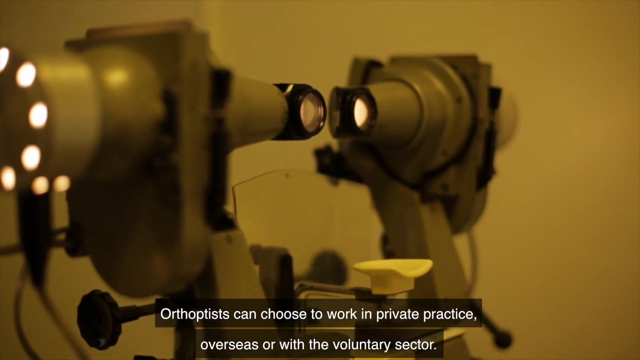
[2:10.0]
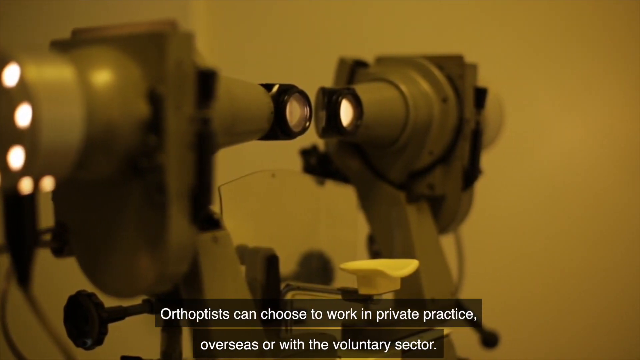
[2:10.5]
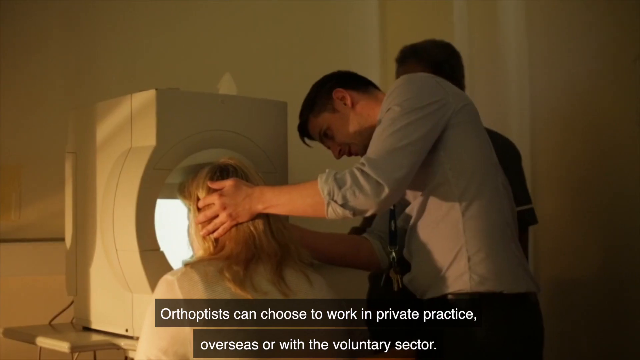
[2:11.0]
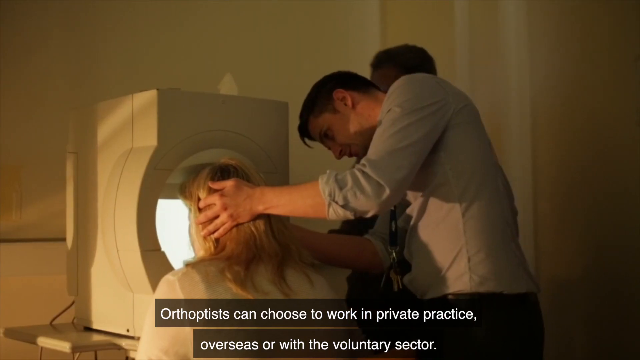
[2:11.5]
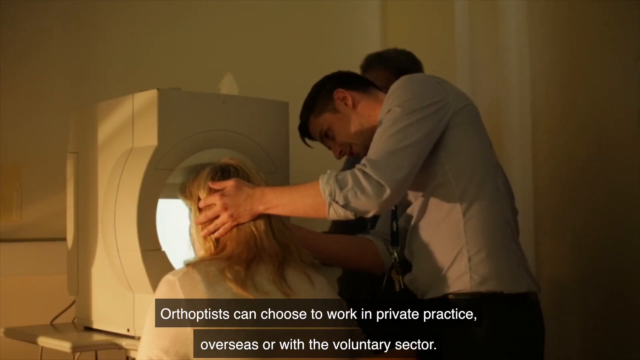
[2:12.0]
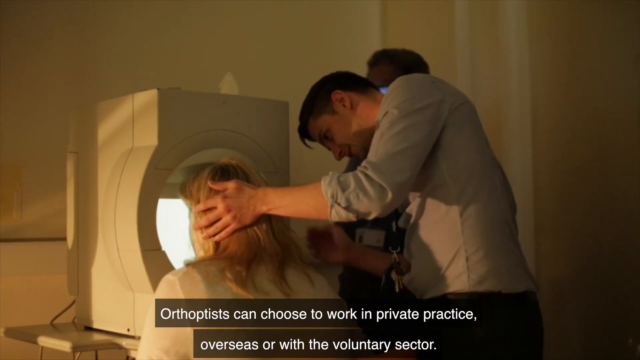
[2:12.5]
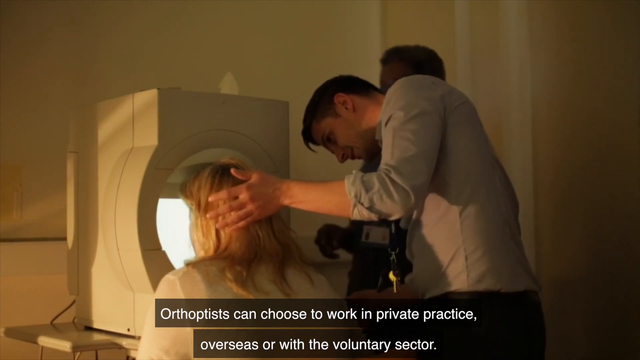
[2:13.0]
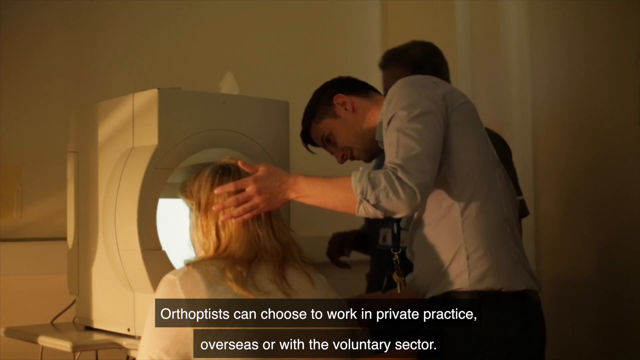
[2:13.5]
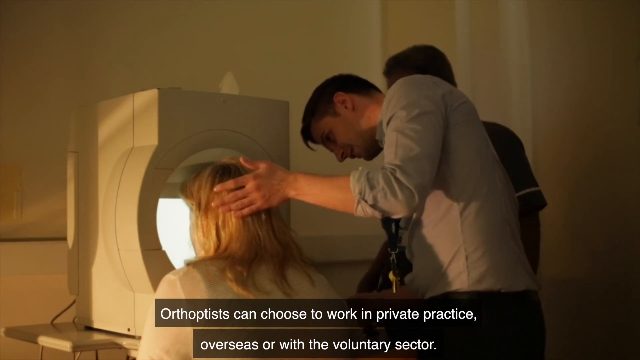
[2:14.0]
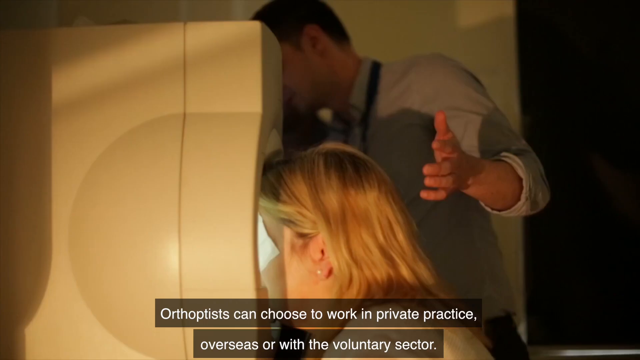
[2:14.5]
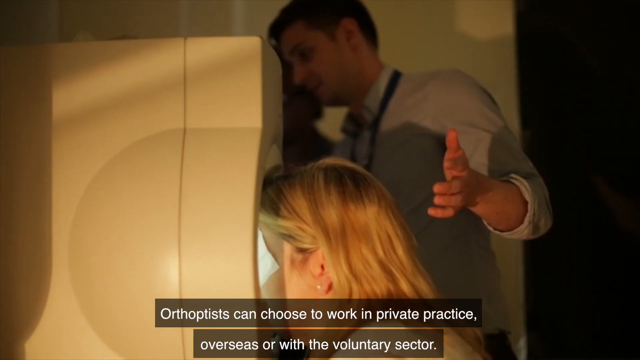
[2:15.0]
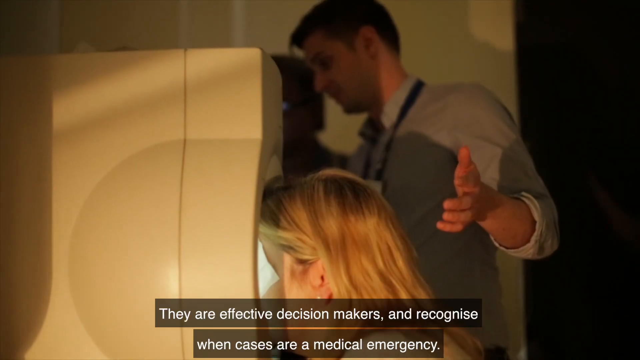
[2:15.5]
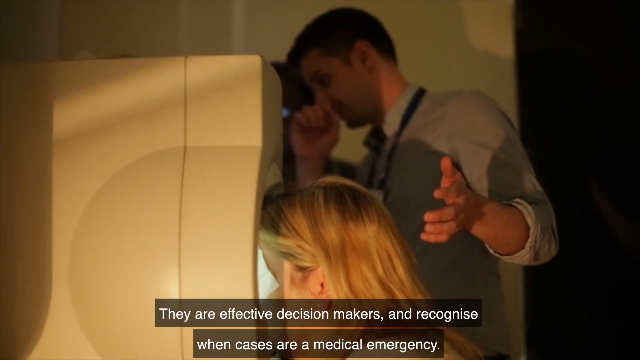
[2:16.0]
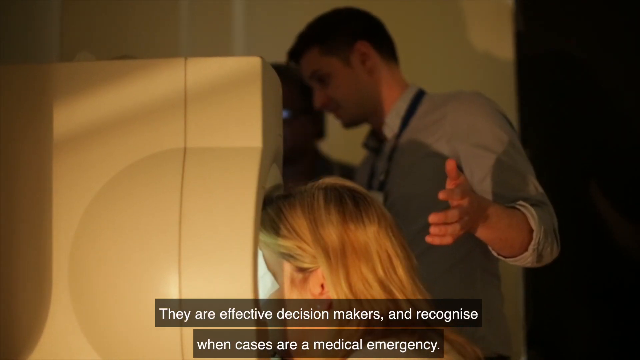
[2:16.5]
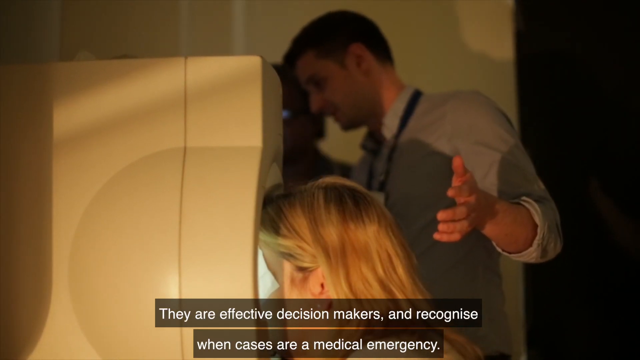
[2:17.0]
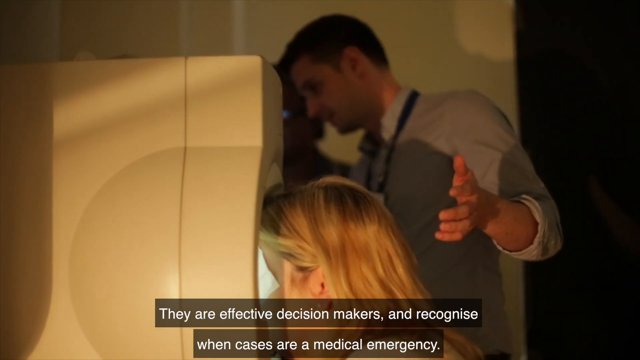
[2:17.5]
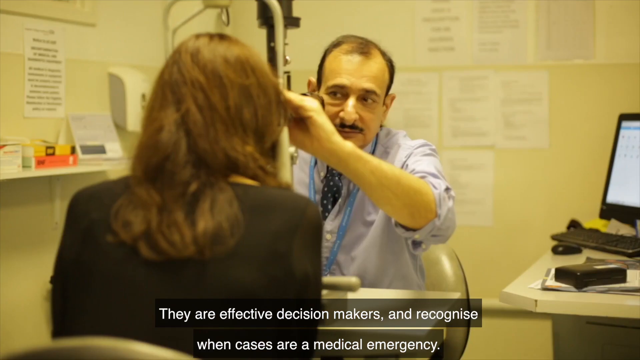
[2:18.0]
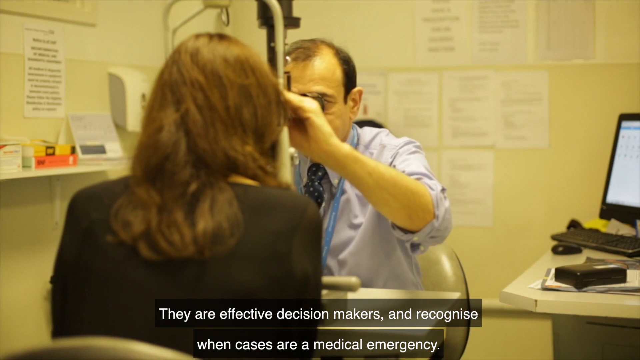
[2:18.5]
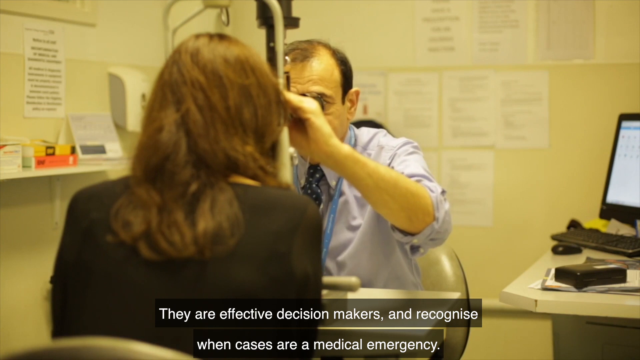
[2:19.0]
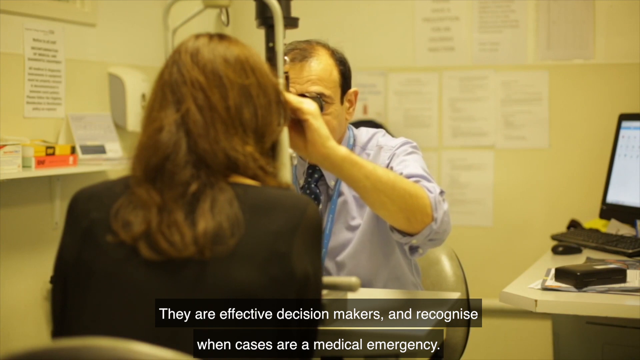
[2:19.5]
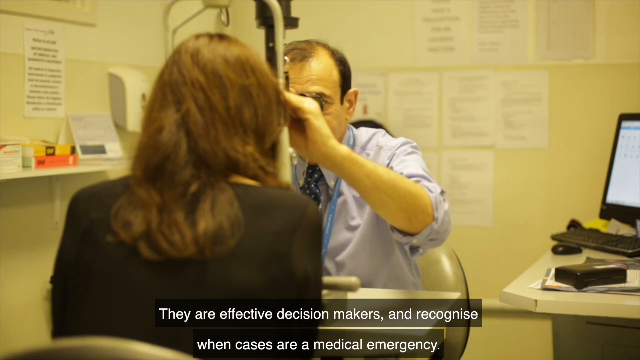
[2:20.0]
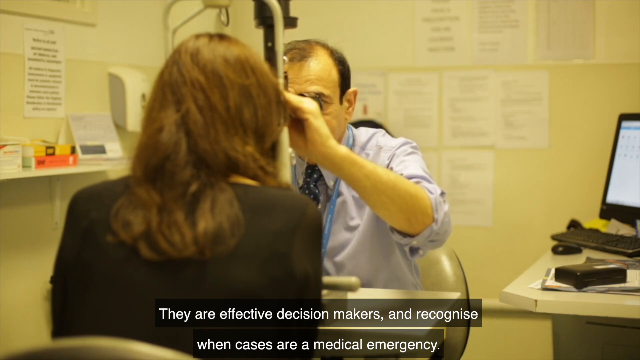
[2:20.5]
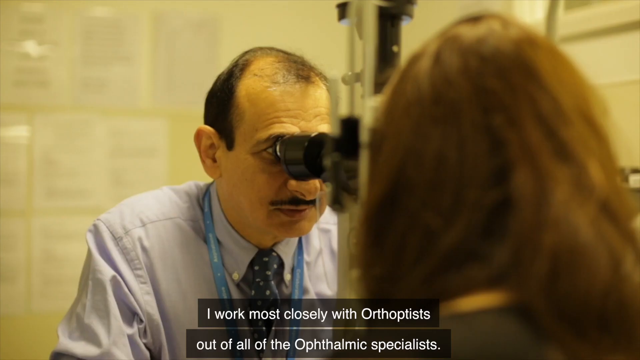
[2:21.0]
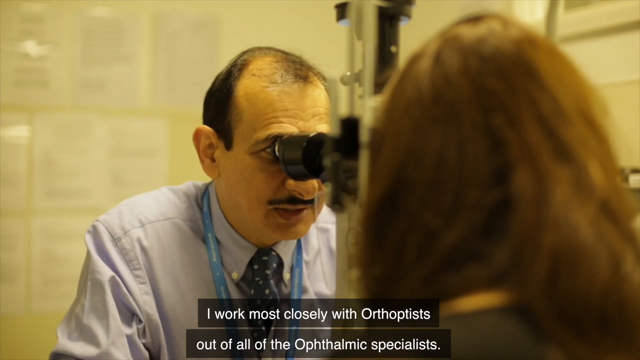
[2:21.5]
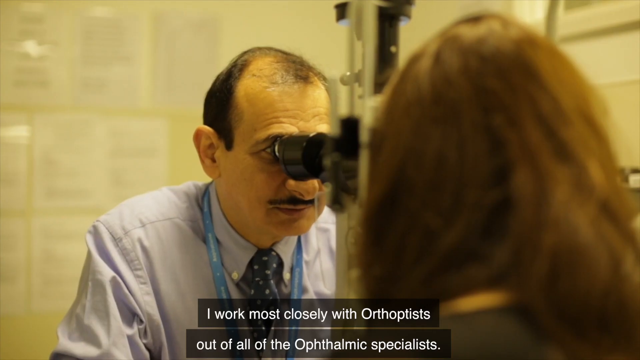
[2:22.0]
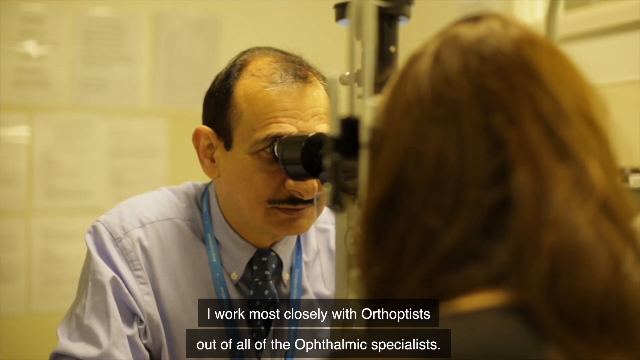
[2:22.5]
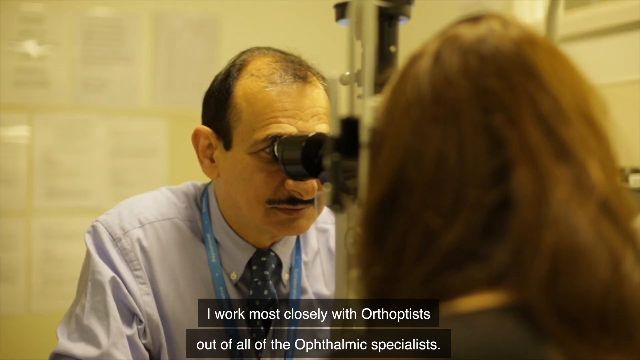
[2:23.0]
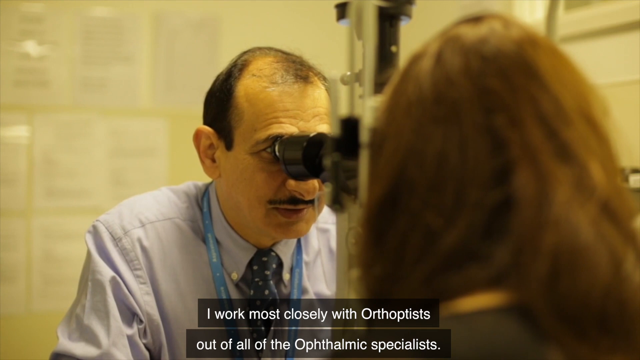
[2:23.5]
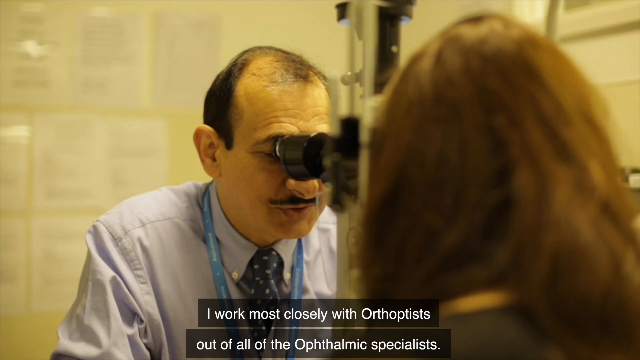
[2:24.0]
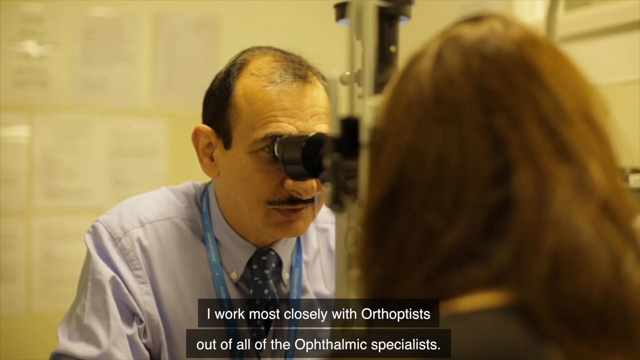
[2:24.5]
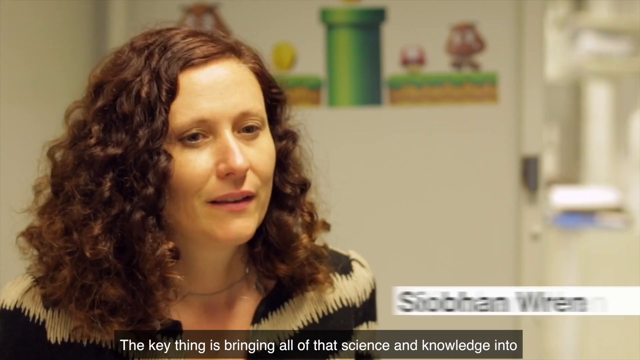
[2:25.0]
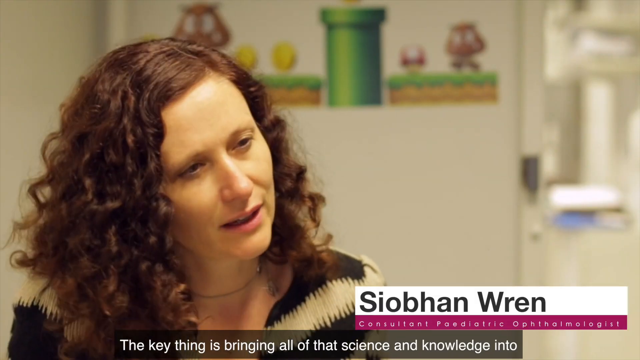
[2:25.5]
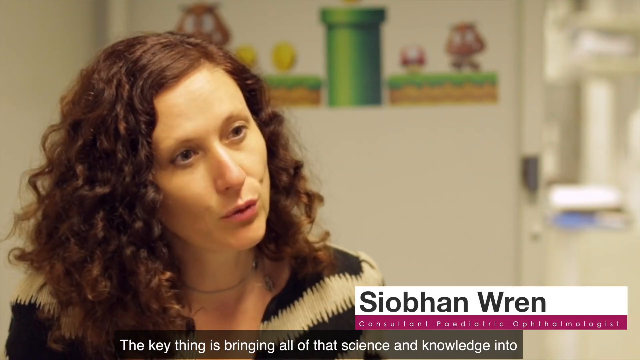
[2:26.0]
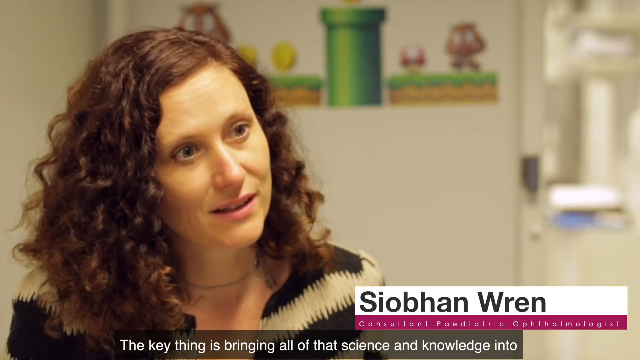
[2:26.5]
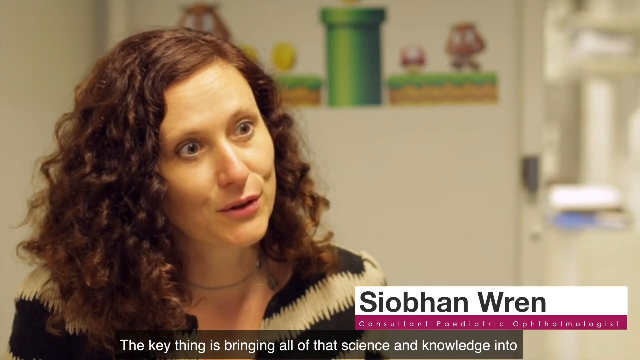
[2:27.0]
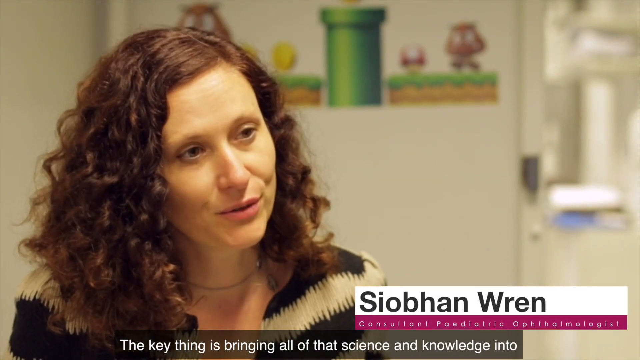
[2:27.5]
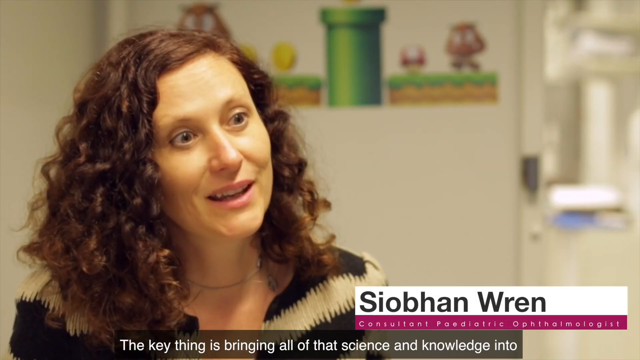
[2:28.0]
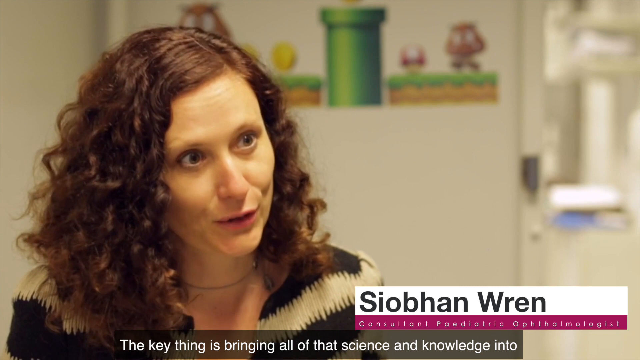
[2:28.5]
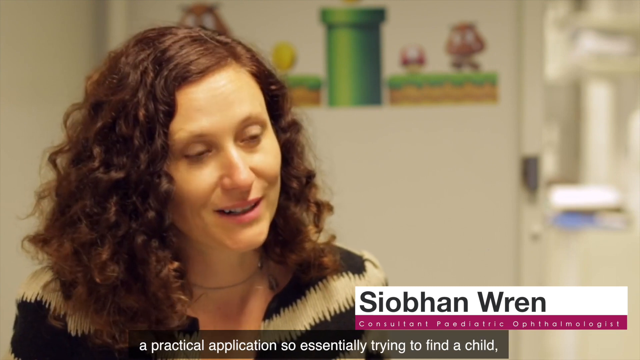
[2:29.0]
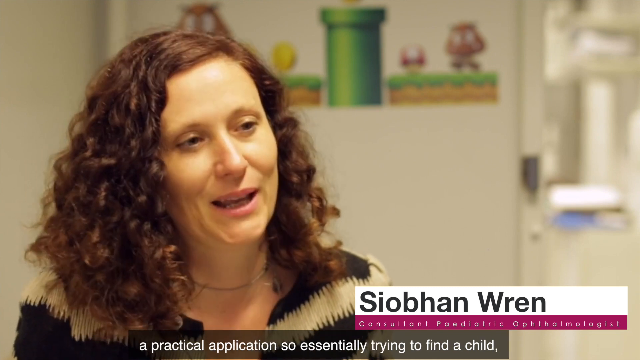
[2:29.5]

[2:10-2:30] A woman with long blonde hair is in a doctor's office with a large machine that has a big round hole. The doctor has his left hand behind her head, holding her head up close so she can look into it at a big screen. The doctor is a young man who looks to be in his thirties, with short dark hair; he is bending over behind her and wears a grayish shirt with a tie. Someone else stands on his right side, mostly out of view. The scene moves to another office with a patient, a woman with long brown hair in a dark shirt. The doctor holds an instrument up to her eyes with his left hand; he wears a long-sleeved blue shirt with the sleeves rolled up and sits in a grayish chair. Behind him is a beige wall with many papers taped on it, and a computer screen is to his right. He examines her eyes, and the view switches to the opposite direction, with him on the left looking through the lenses at her eyes and her on the right side of the instrument. Then a woman is shown speaking to the camera.